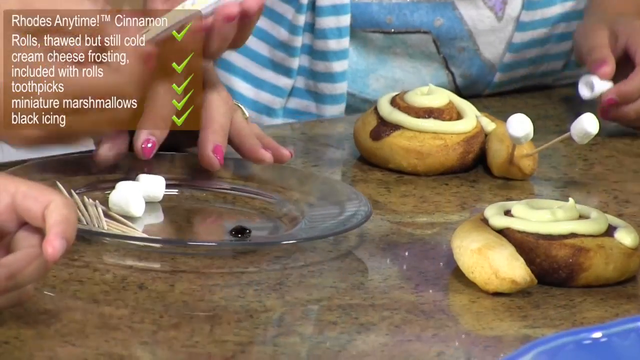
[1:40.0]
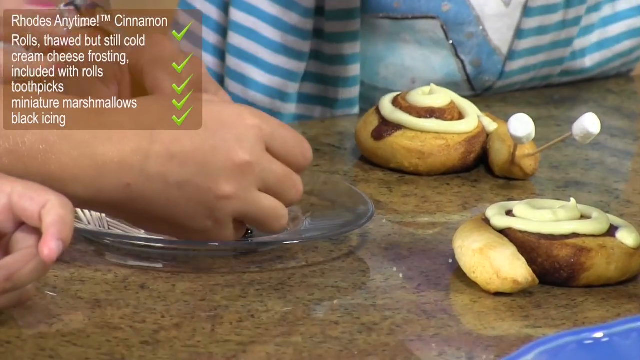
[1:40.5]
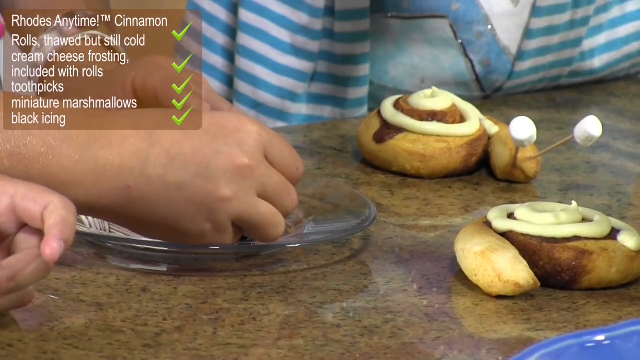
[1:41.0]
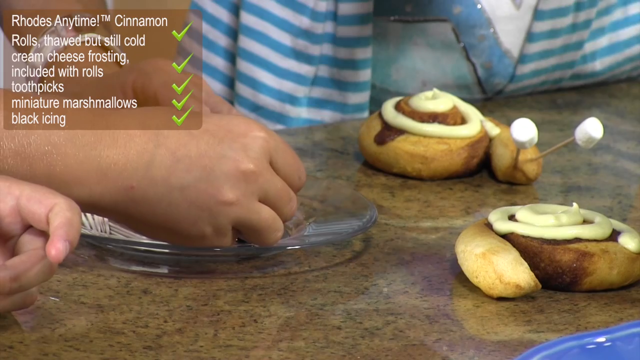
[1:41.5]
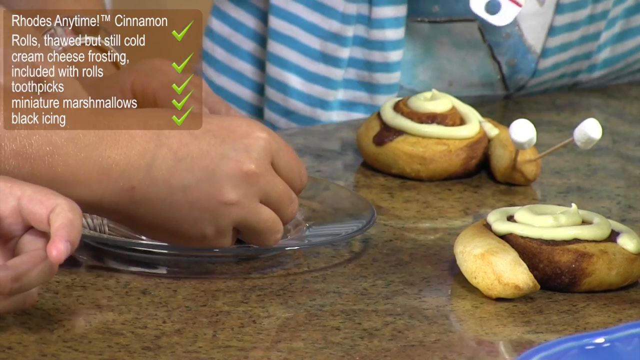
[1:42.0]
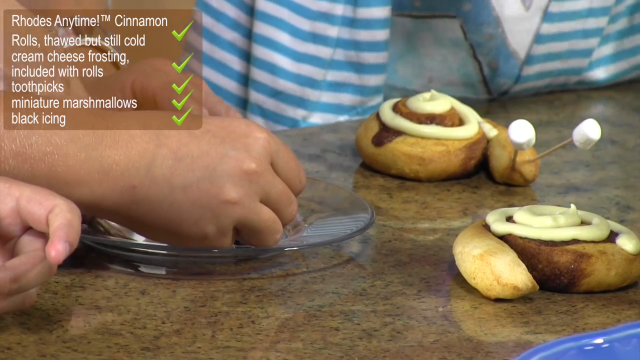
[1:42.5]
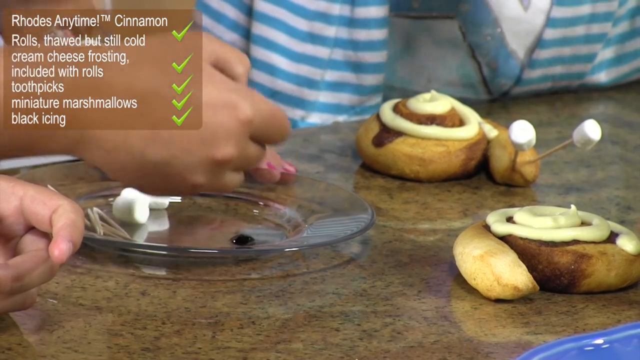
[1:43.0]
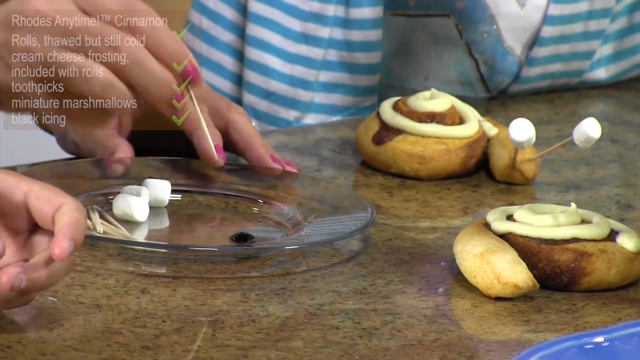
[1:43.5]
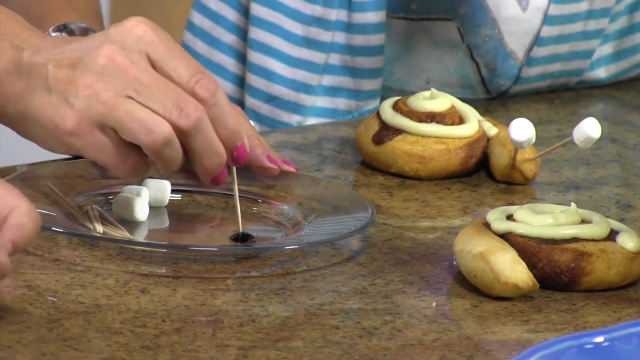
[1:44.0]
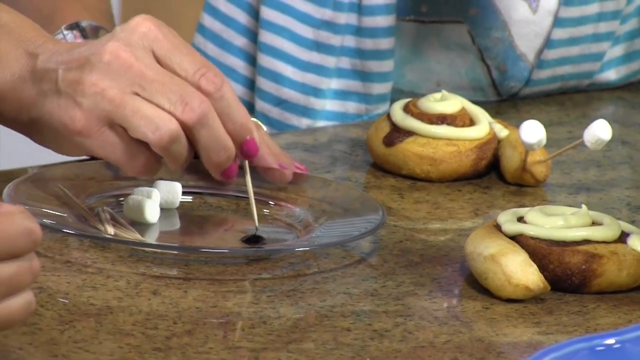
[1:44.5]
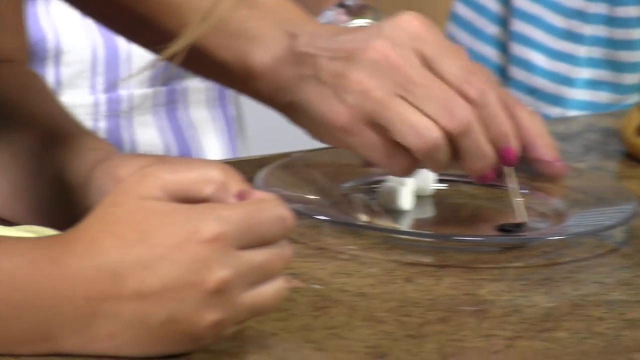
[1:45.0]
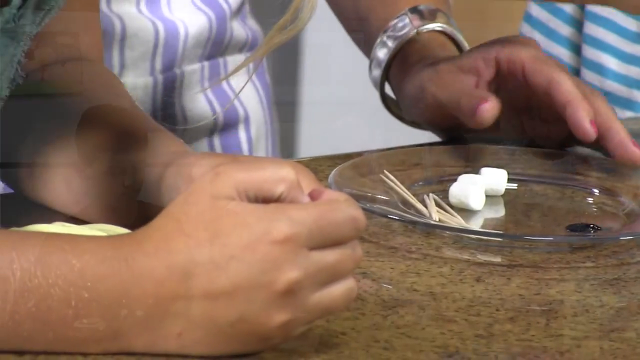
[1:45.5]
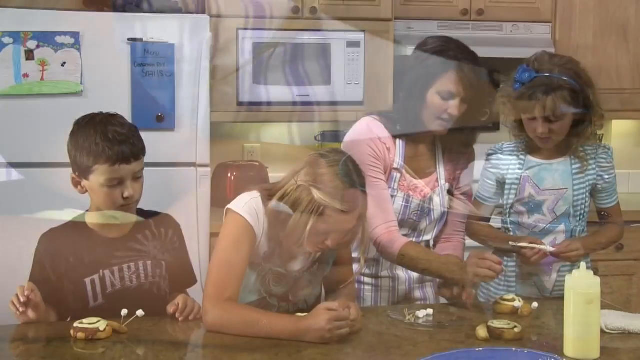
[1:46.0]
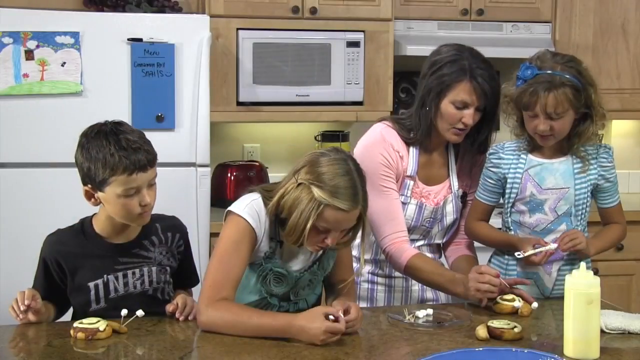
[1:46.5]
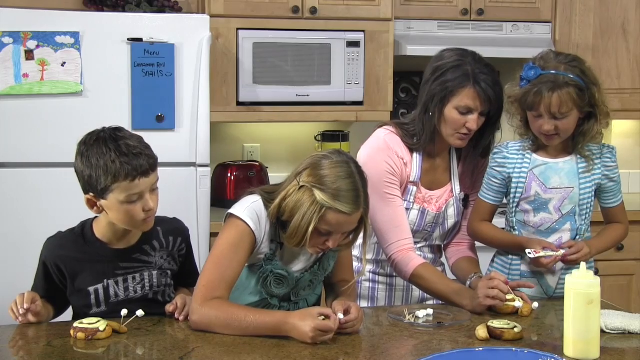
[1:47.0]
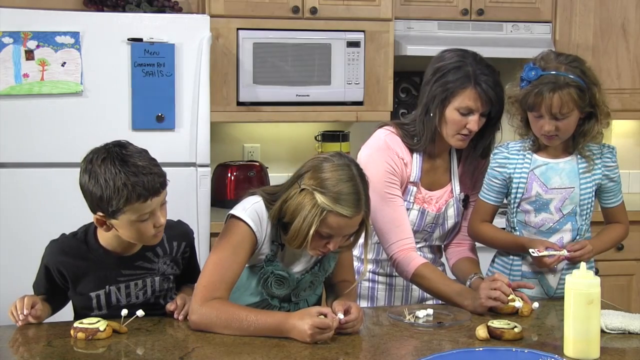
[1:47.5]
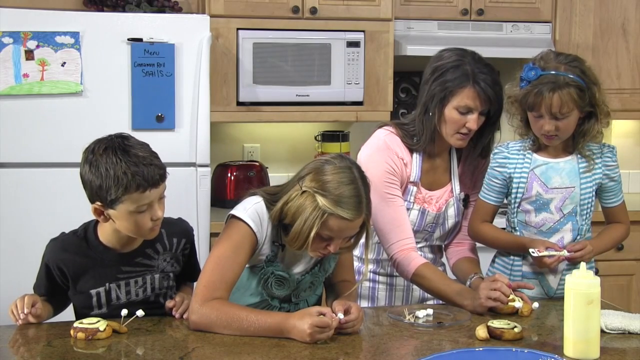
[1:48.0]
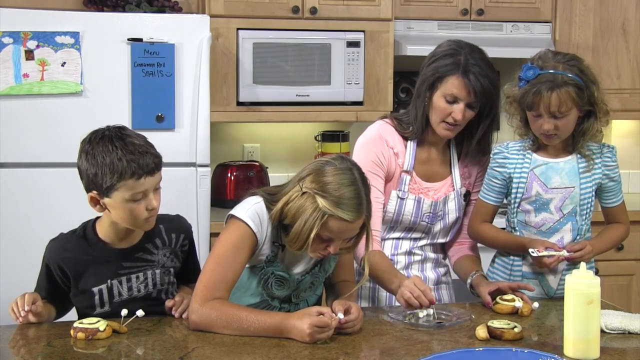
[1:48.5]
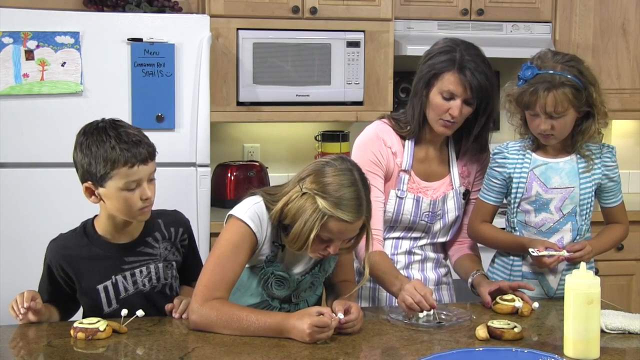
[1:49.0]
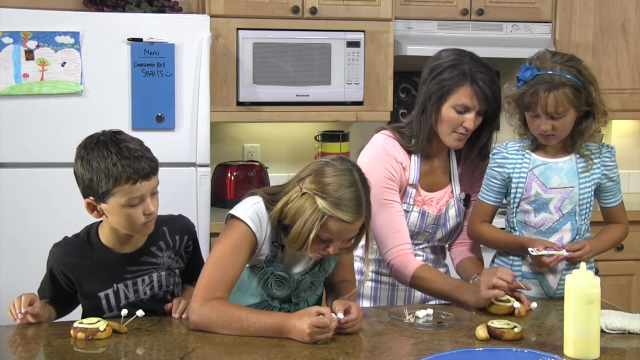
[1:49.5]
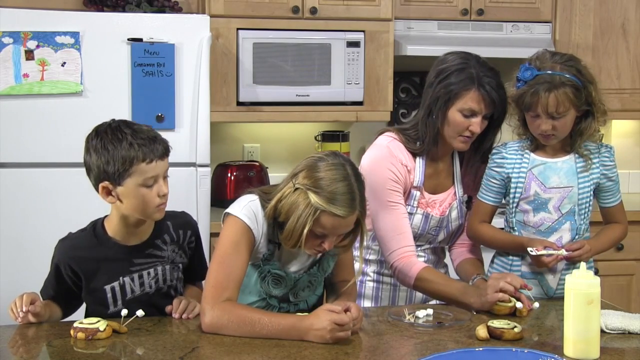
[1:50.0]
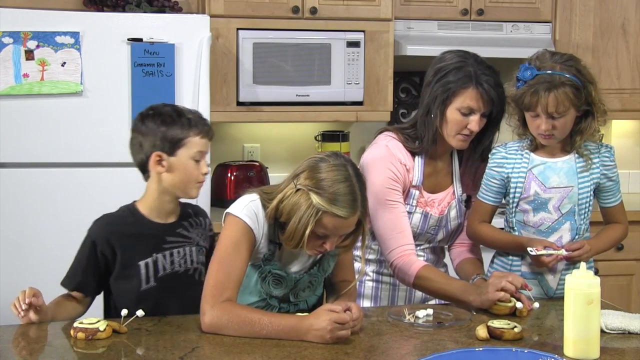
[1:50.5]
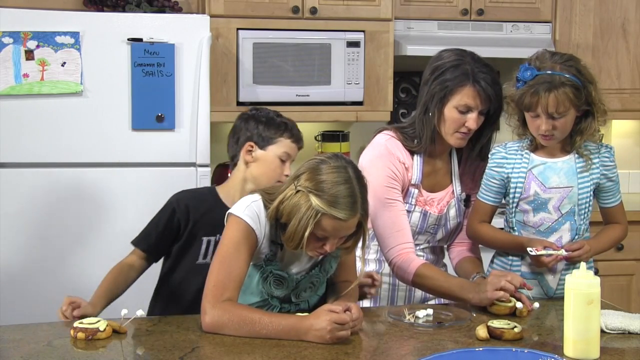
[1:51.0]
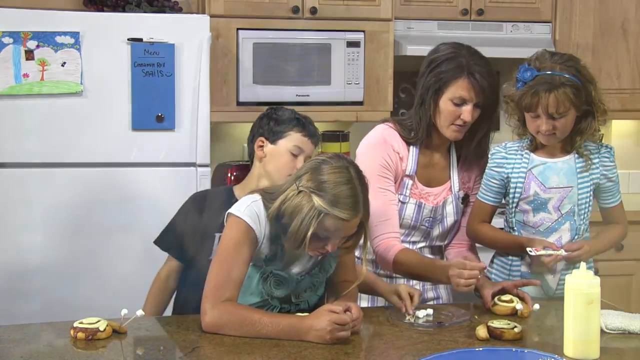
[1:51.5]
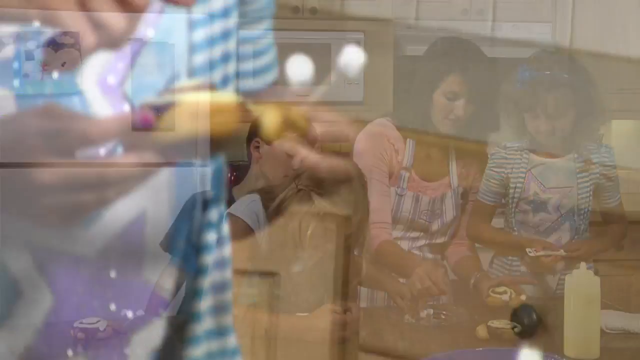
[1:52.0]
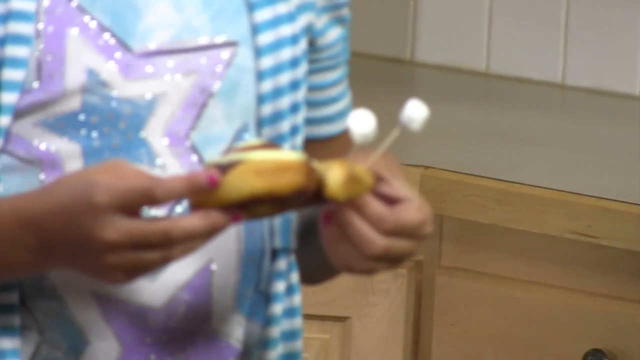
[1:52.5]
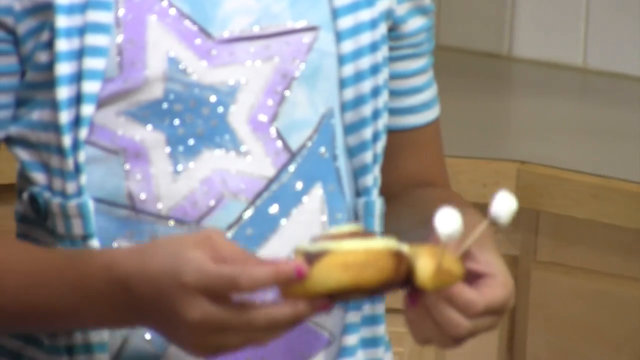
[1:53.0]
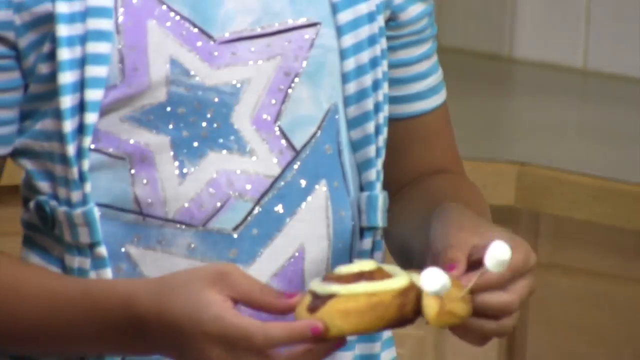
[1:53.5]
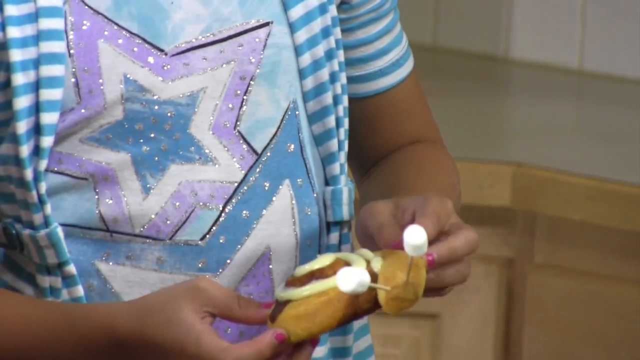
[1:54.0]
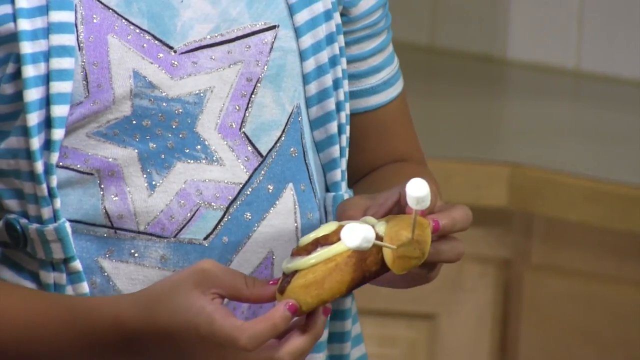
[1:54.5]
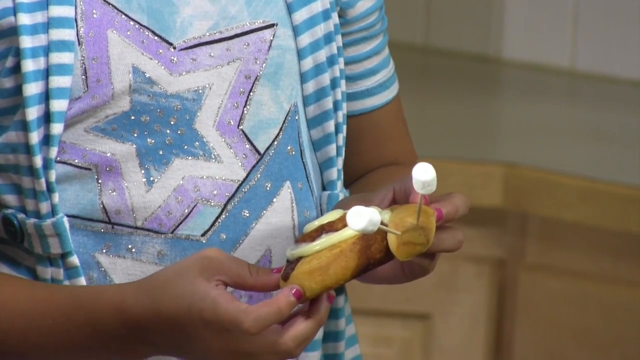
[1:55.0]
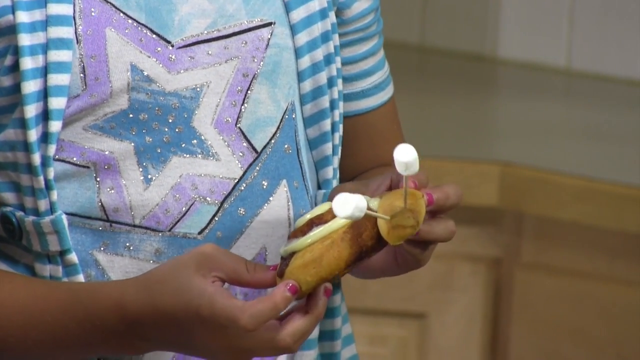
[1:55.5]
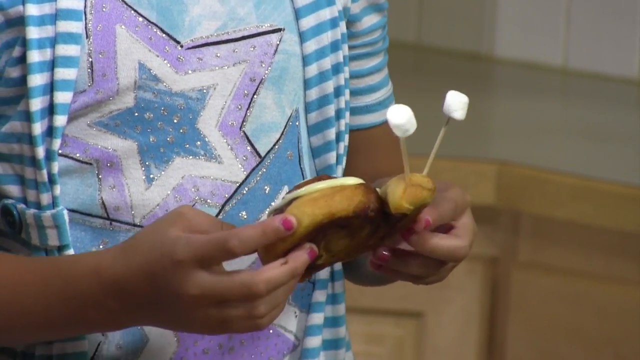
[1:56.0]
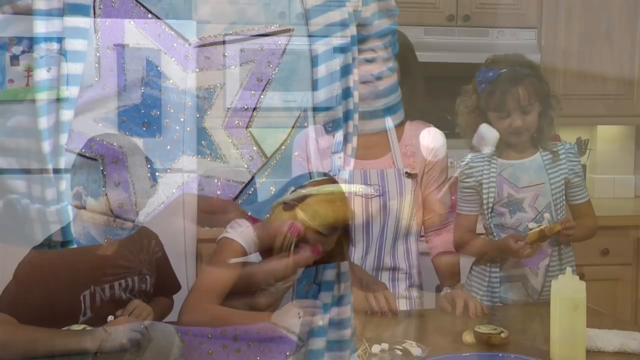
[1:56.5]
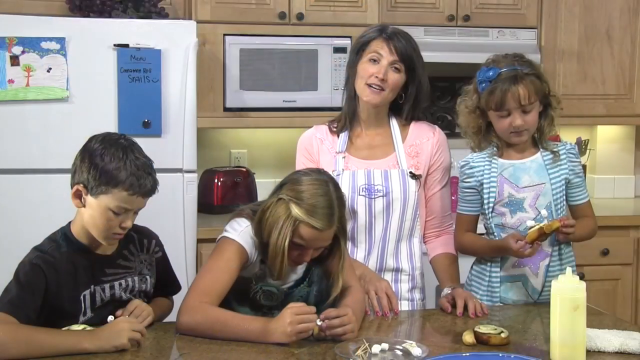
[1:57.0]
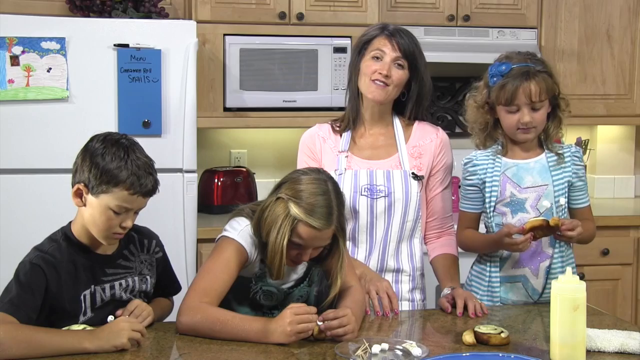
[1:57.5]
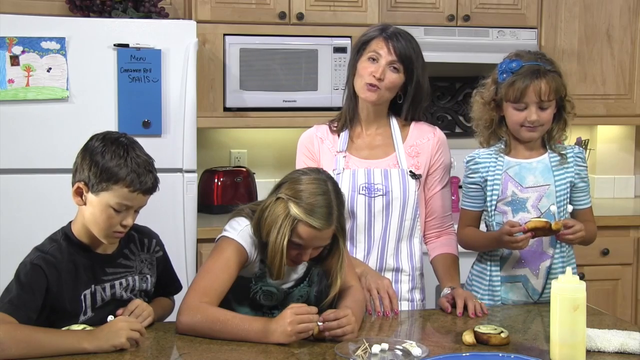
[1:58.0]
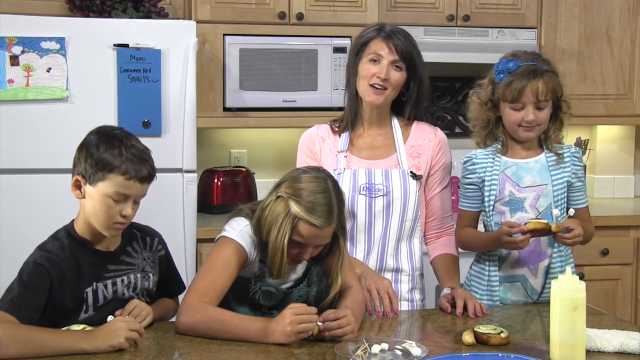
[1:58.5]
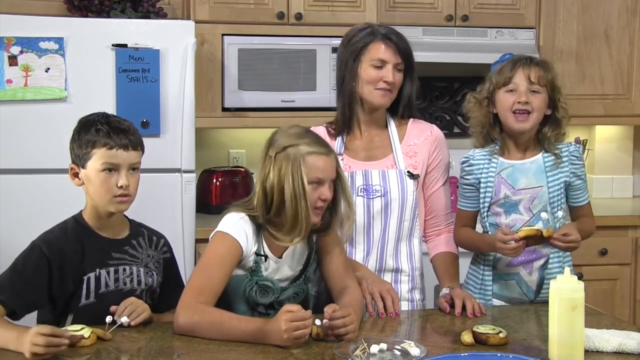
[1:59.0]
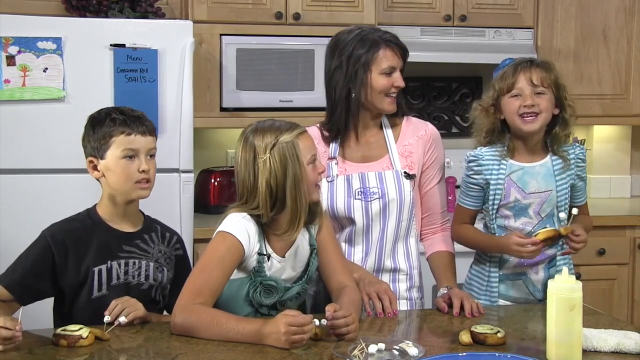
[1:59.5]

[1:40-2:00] The caption on the left-hand side lists cream cheese frosting included with rolls, a toothpick, miniature marshmallows and black icing, with green ticks on the right side of the text. A zoomed-in view shows their fingers working on top of their snails. A plate carries the ingredients they need: black icing, white miniature marshmallows and toothpicks. They place the miniature marshmallows onto the toothpicks, and the mother then dips a toothpick into the black frosting and places them onto the cinnamon rolls. Afterwards they all speak to the camera, with the child on the mother's right giving a very big smile and seeming to be screaming.